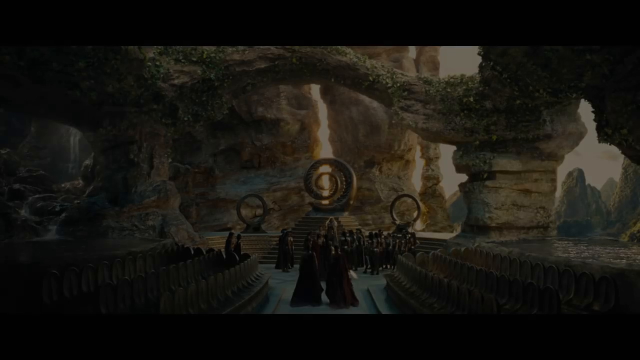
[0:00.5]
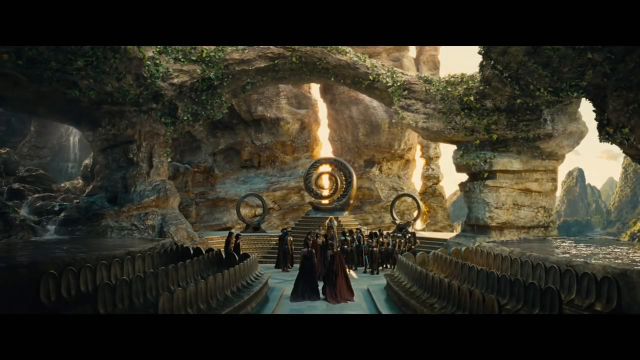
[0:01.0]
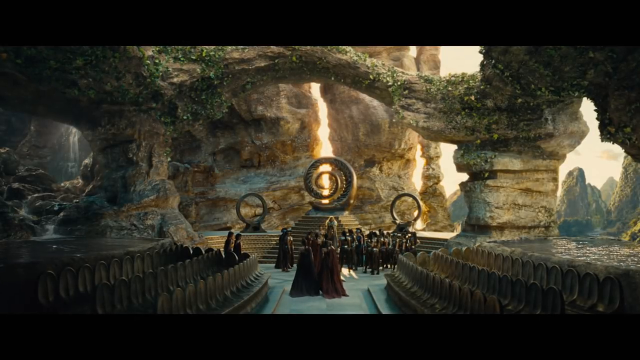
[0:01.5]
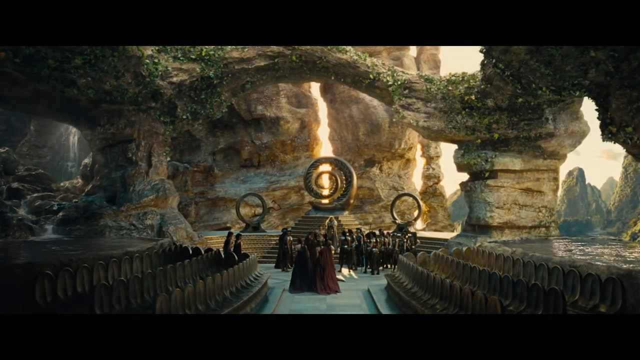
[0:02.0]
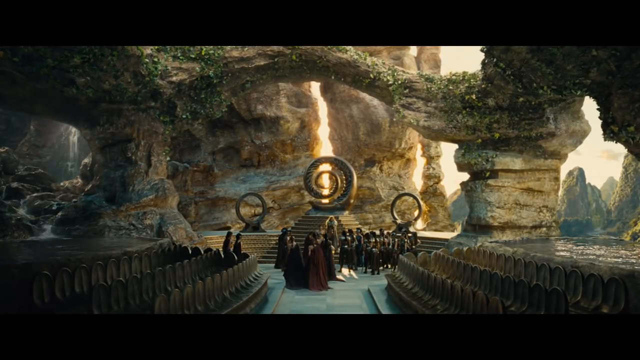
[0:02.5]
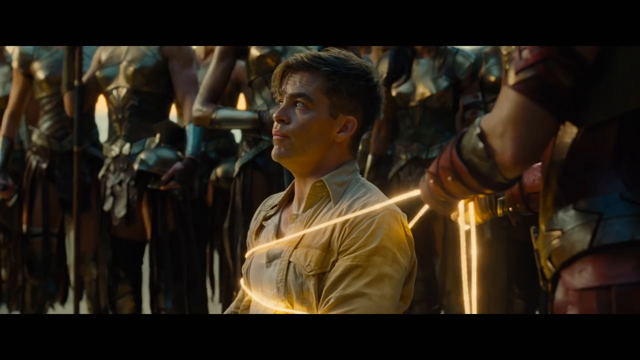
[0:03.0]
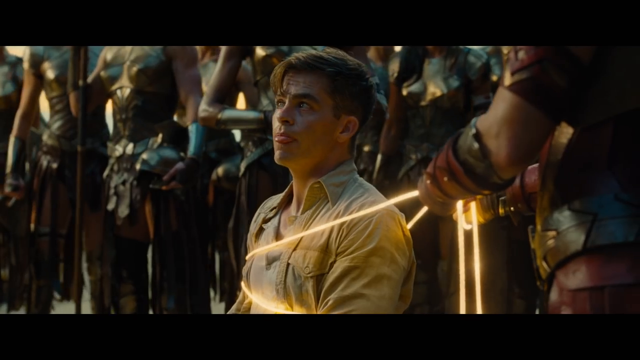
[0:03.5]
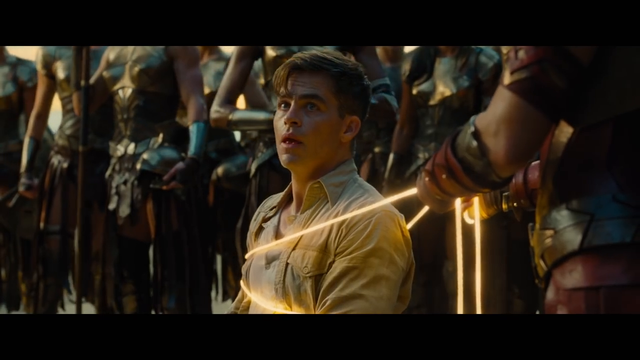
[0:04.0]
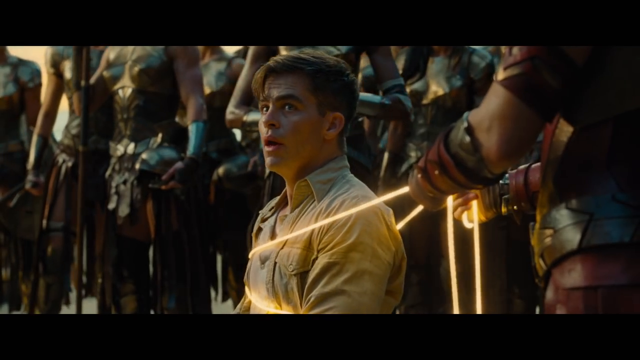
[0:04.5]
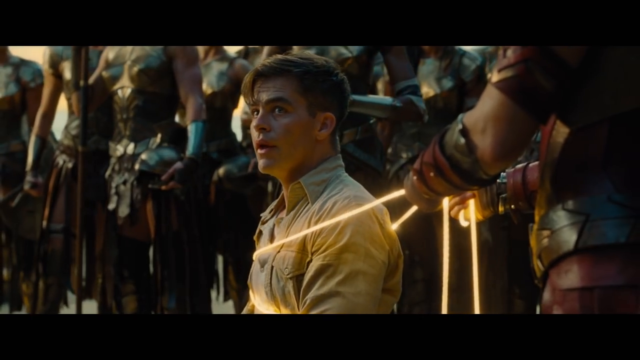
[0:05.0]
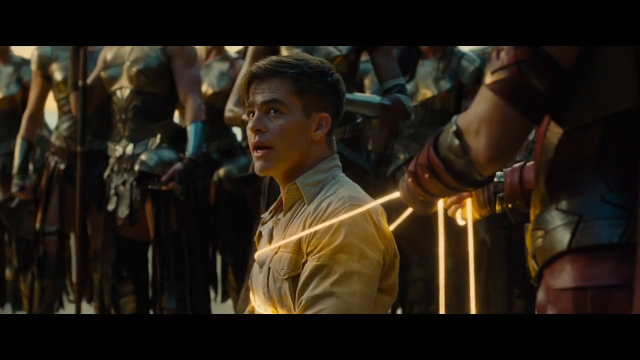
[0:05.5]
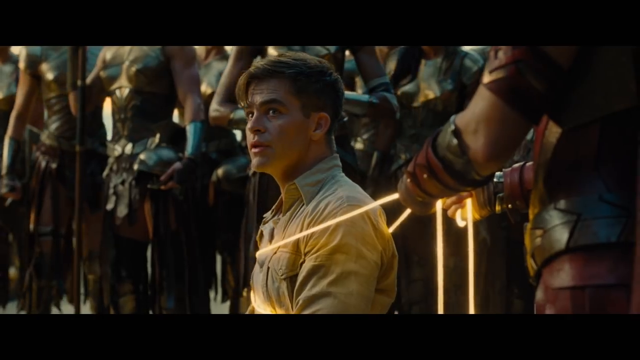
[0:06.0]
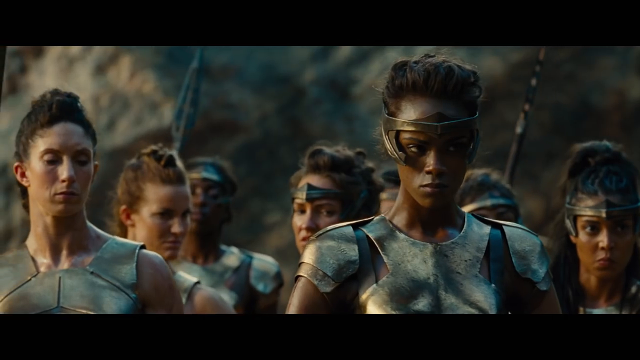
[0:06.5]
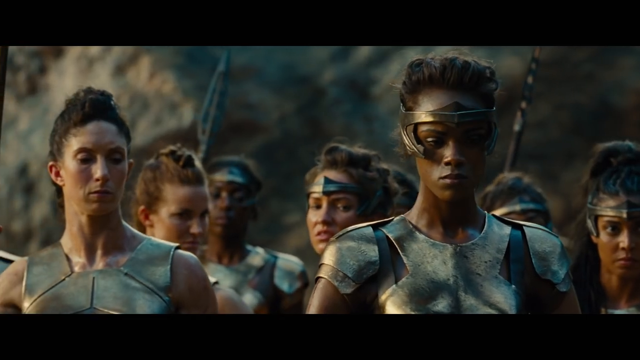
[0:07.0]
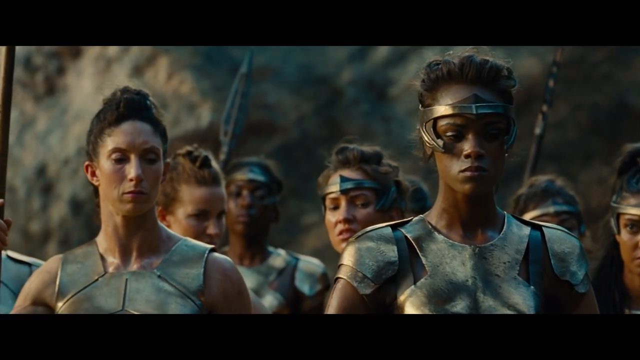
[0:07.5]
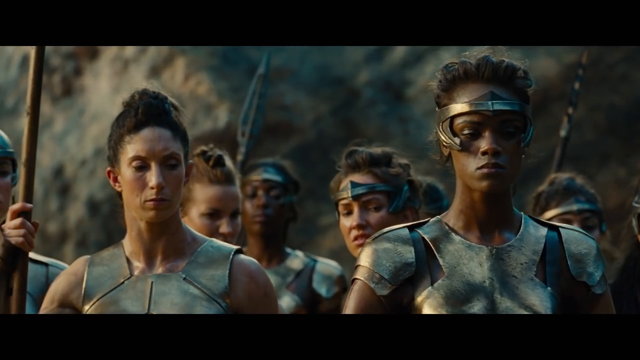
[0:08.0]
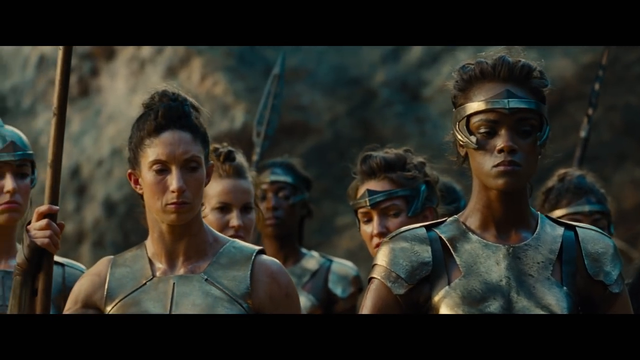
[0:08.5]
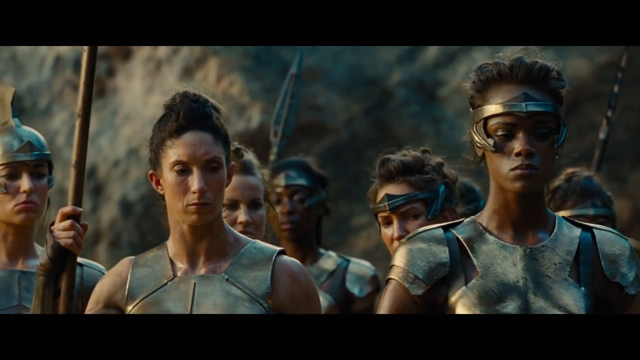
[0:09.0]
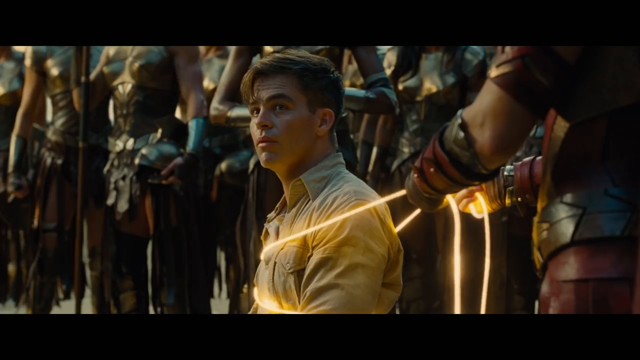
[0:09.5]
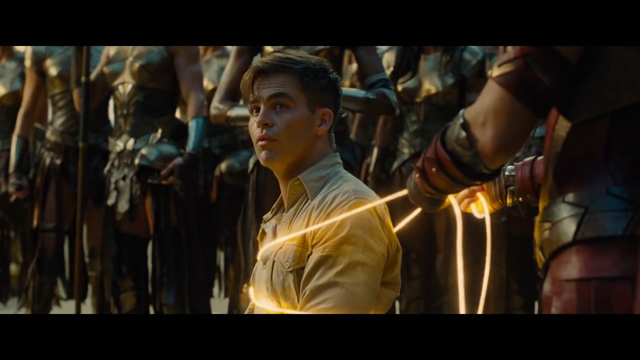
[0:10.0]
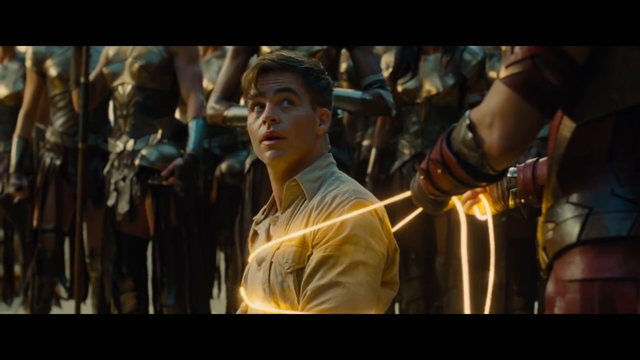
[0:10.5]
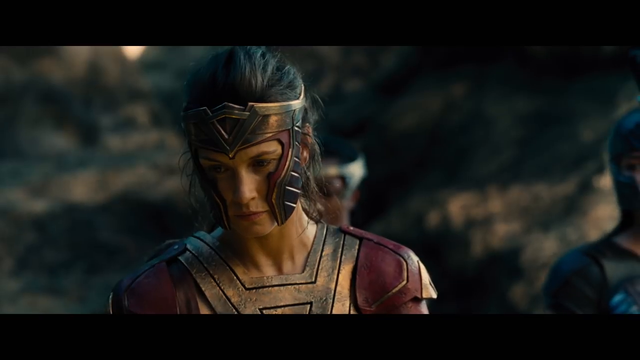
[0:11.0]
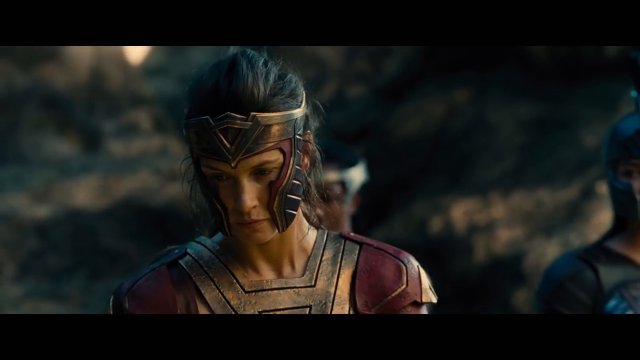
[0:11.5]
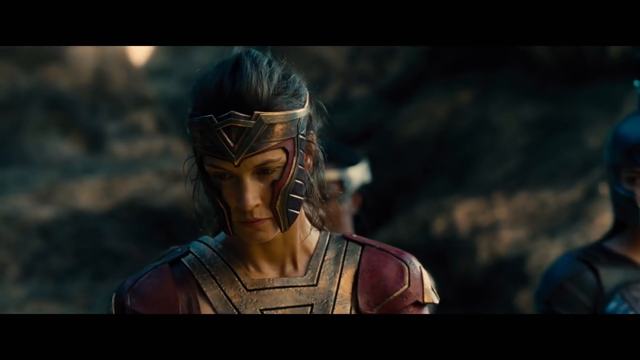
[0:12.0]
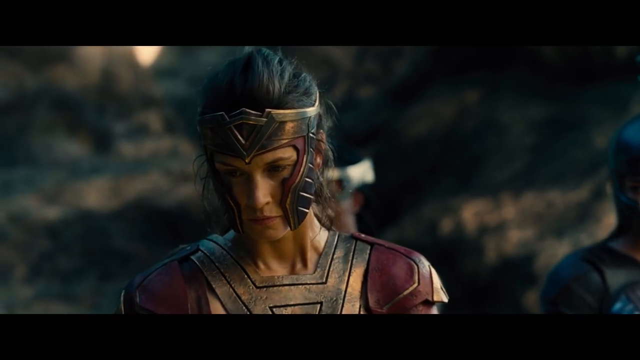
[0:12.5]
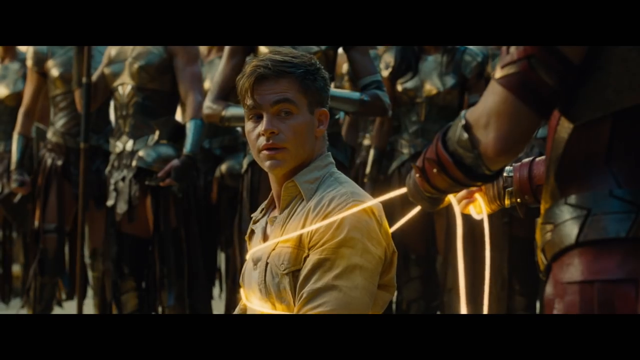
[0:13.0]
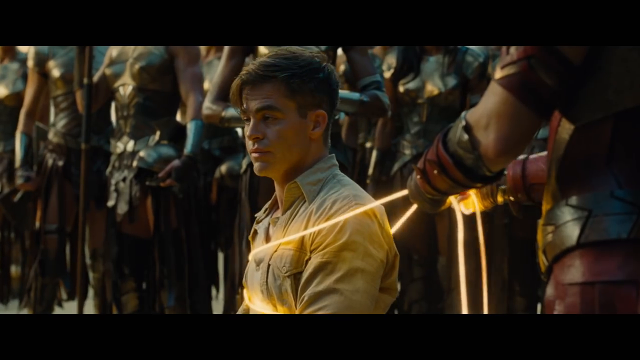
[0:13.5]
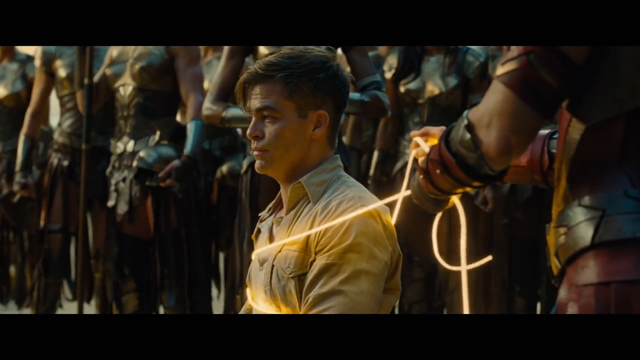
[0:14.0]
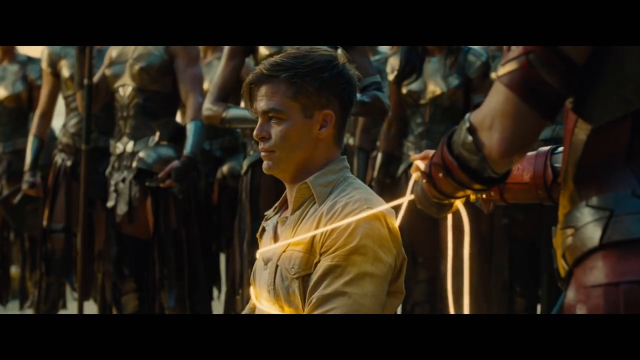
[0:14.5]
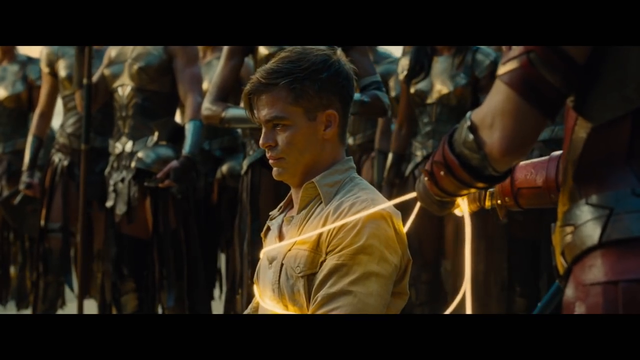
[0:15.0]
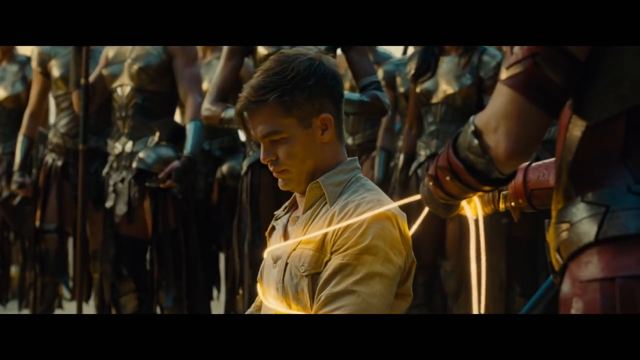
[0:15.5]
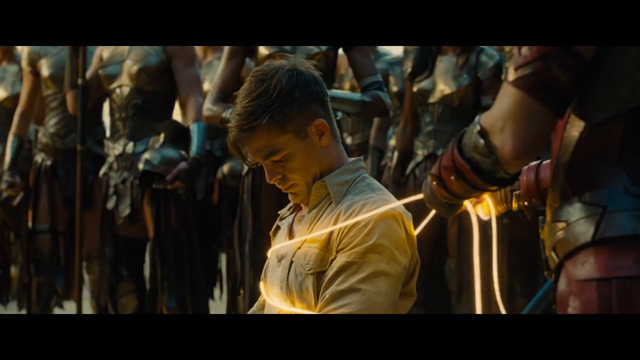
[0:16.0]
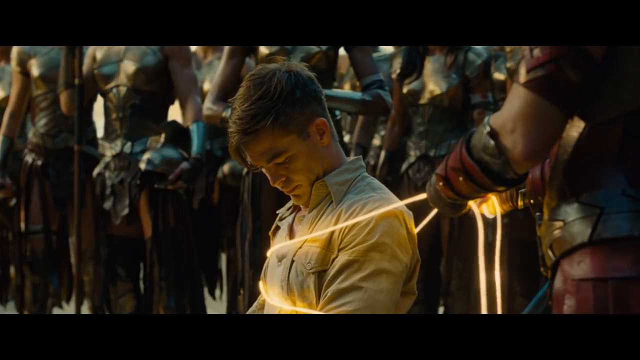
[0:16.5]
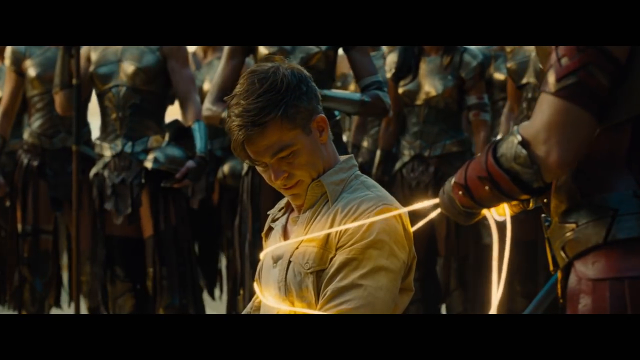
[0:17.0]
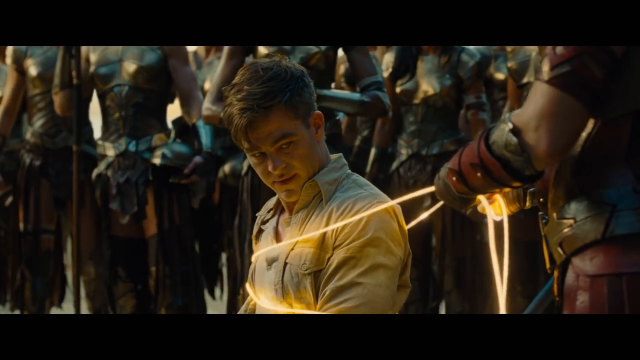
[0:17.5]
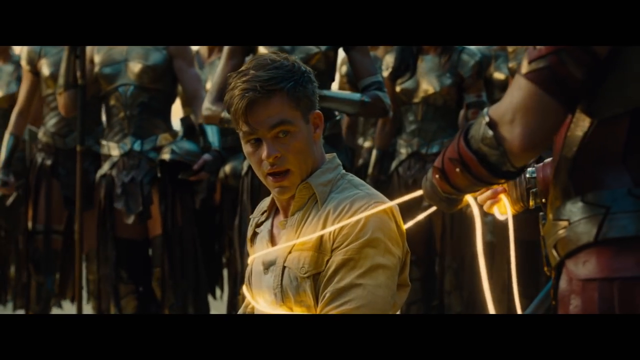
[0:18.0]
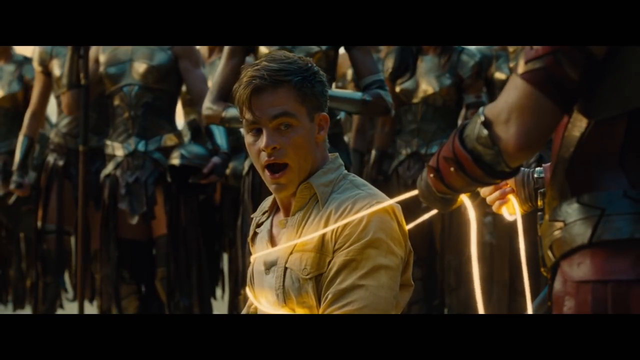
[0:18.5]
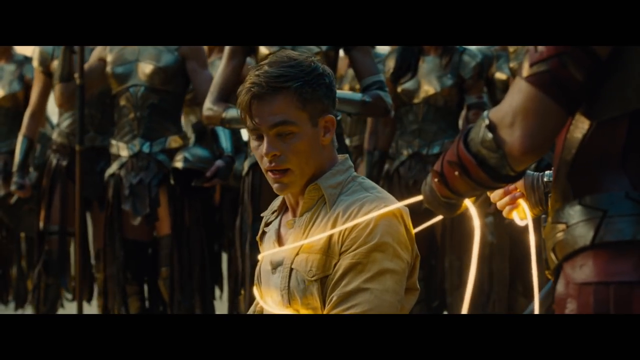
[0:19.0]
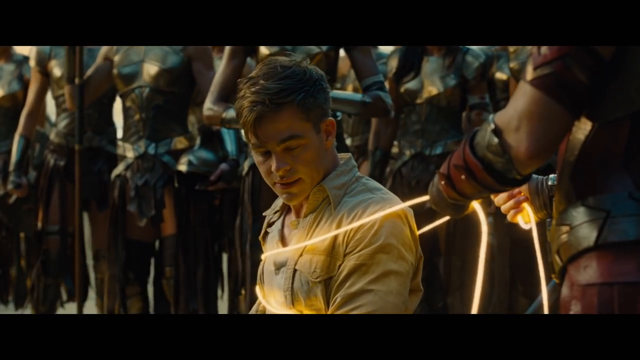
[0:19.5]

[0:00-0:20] The video opens on a futuristic scene with three symbols in the center of the screen. The middle one is a little more defined and has more detail, and it seems to be making a kind of spiral. Underneath it there seem to be some stairs, and in front of it stand groups of people. A man in a button-down beige shirt is held captive. He seems worried about what will happen next, as guards stand around him and hold him hostage with a glowing rope. The camera pans to a woman with dark brown hair in a ponytail who is dressed in warrior attire. She stands there and does not speak, and she appears to be looking directly at the man. The camera returns to the man, who looks around at all the women around him dressed in warrior attire.